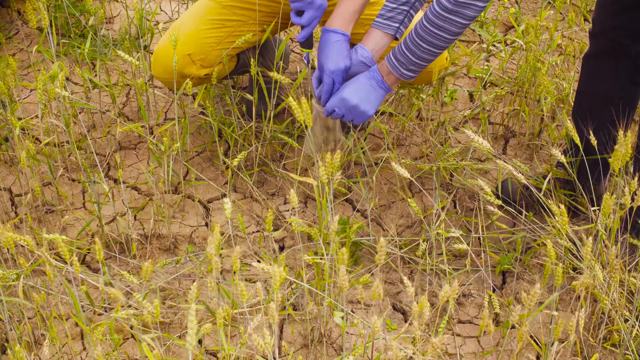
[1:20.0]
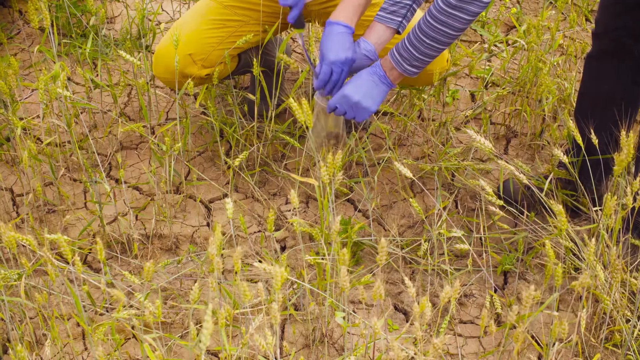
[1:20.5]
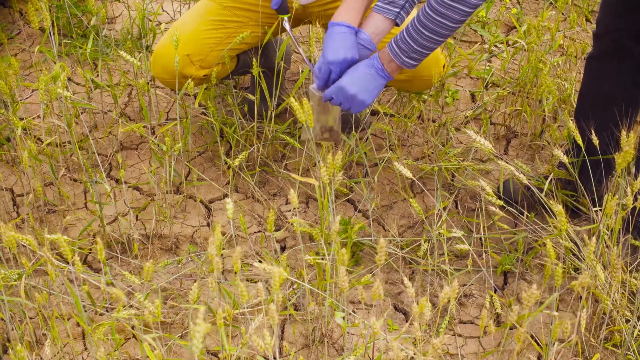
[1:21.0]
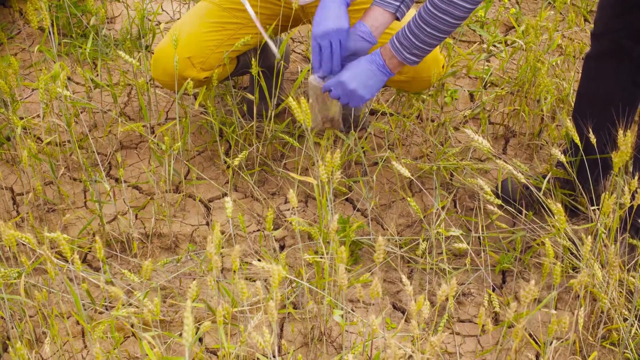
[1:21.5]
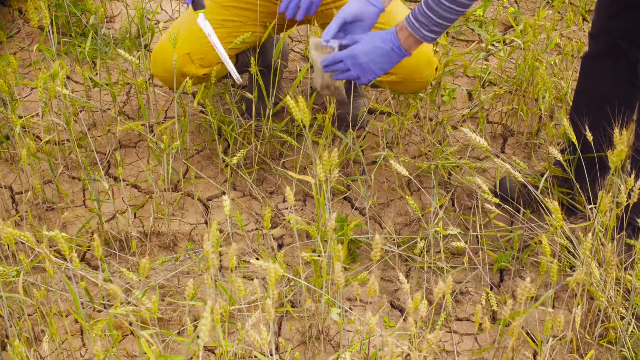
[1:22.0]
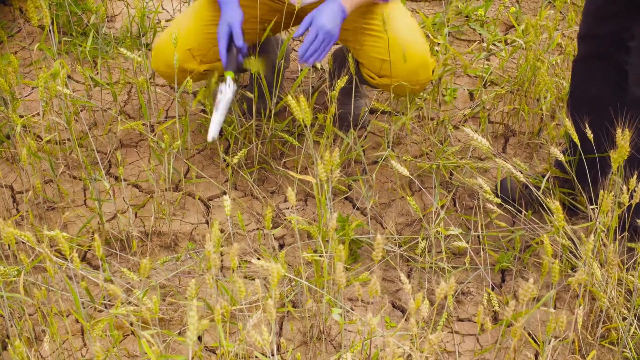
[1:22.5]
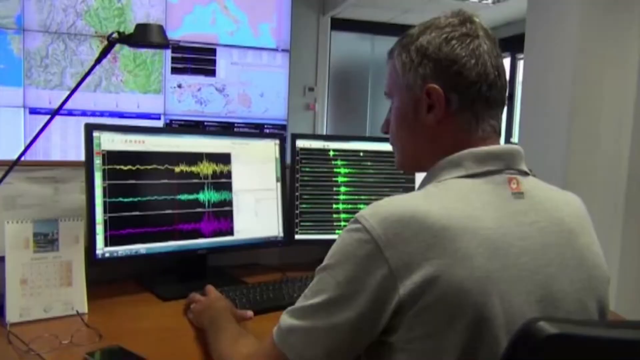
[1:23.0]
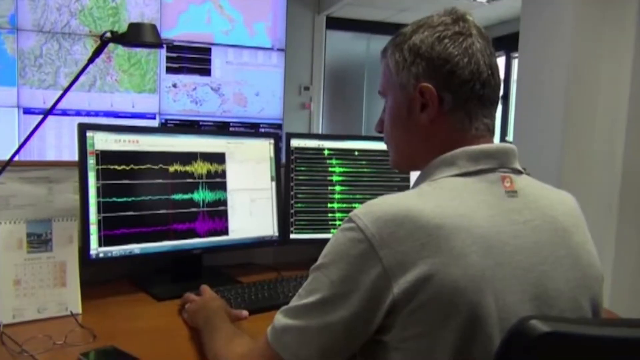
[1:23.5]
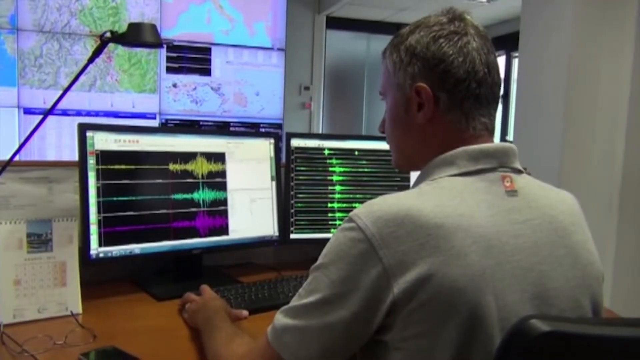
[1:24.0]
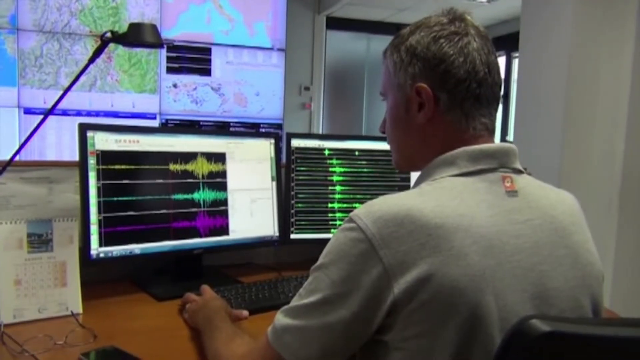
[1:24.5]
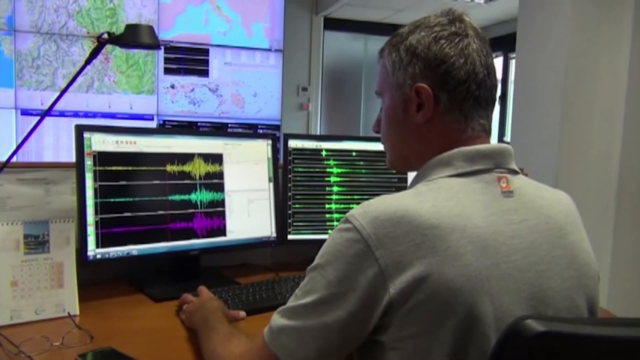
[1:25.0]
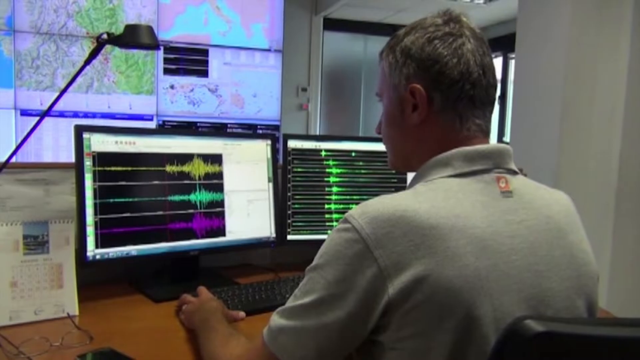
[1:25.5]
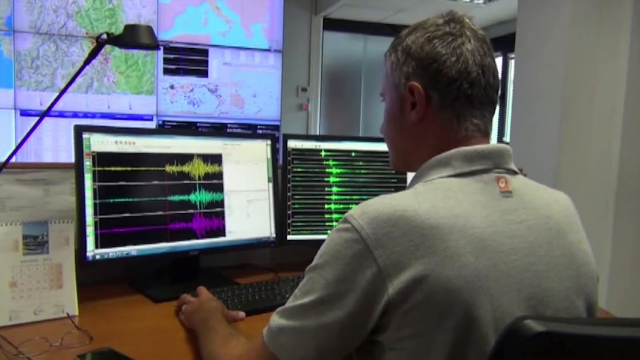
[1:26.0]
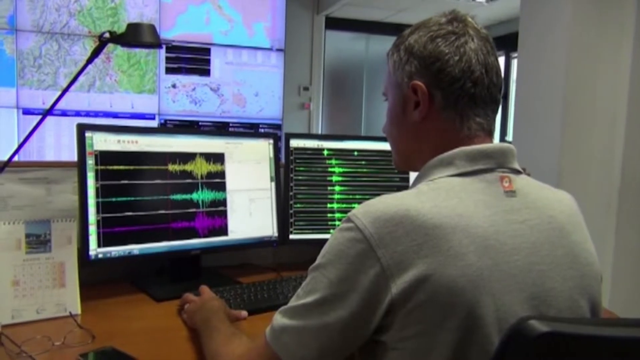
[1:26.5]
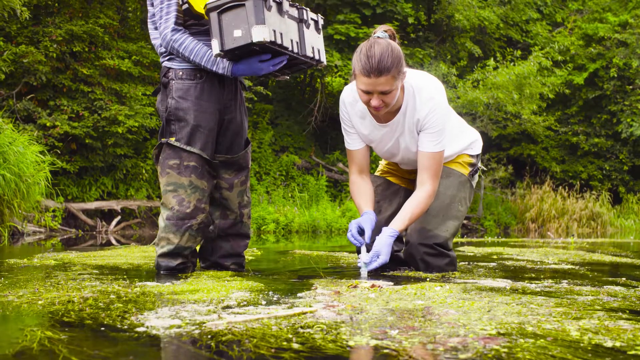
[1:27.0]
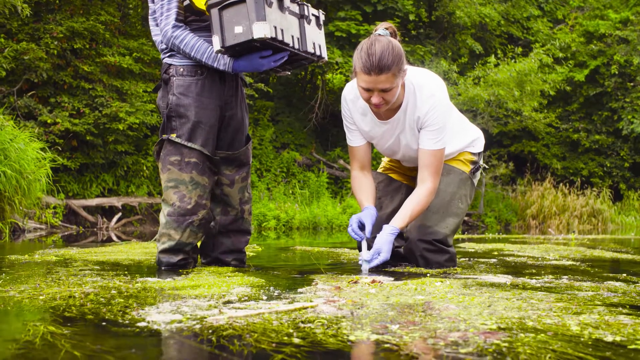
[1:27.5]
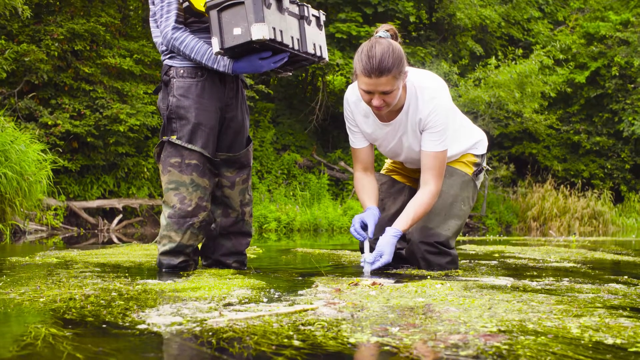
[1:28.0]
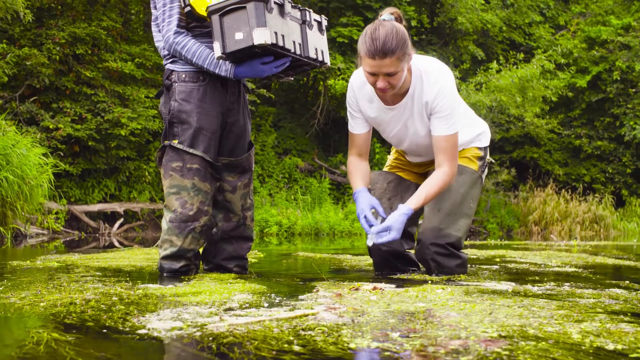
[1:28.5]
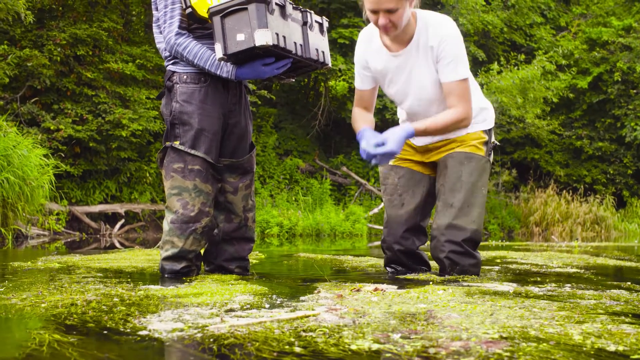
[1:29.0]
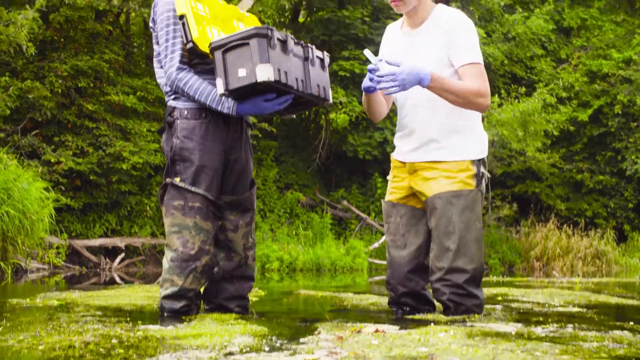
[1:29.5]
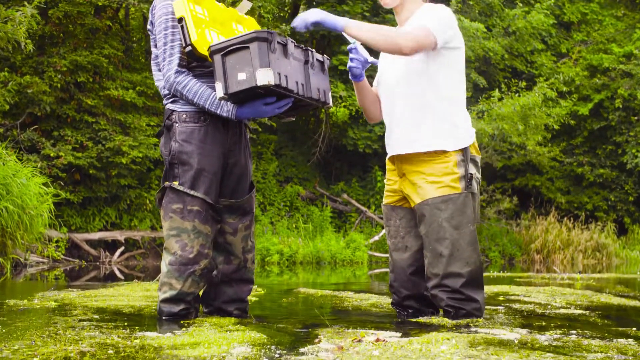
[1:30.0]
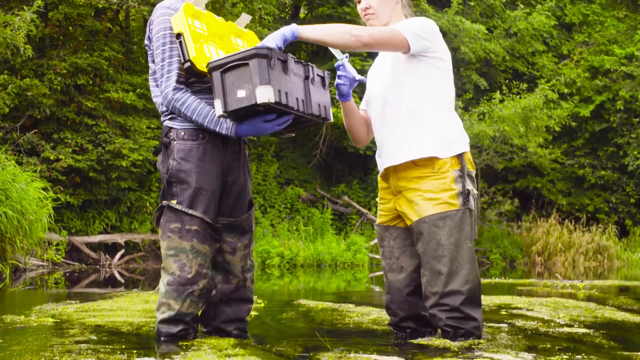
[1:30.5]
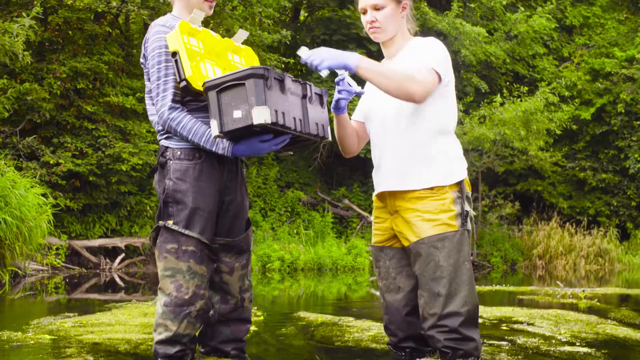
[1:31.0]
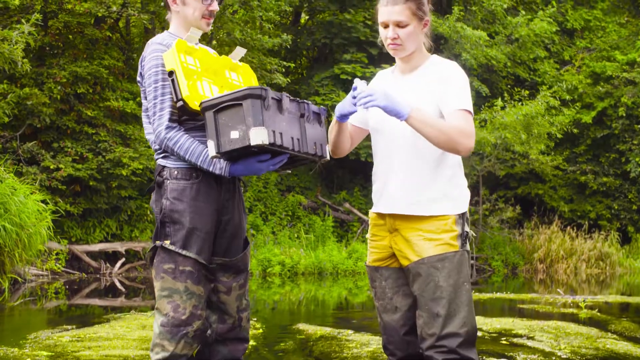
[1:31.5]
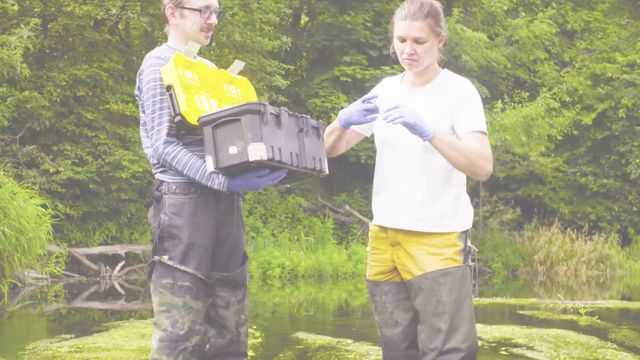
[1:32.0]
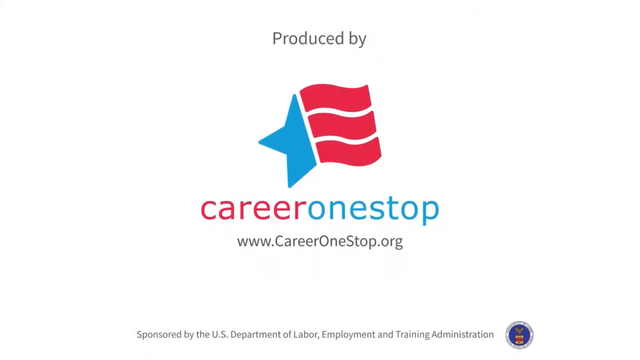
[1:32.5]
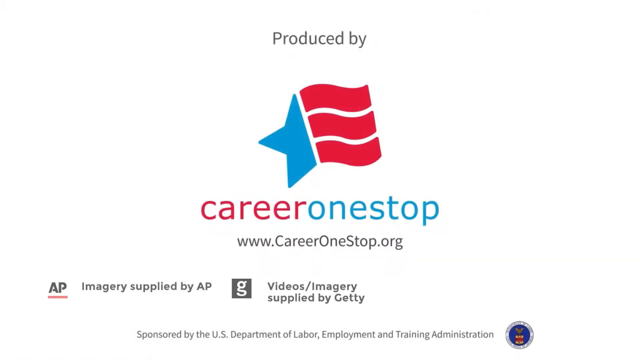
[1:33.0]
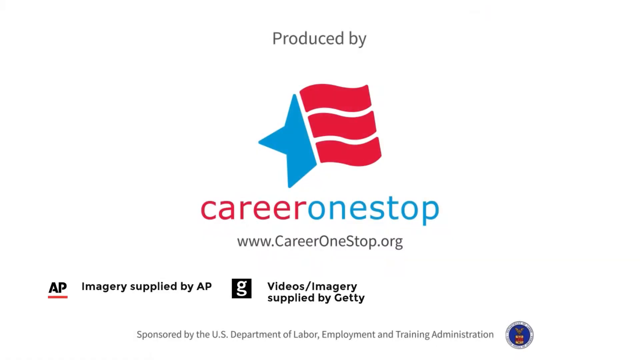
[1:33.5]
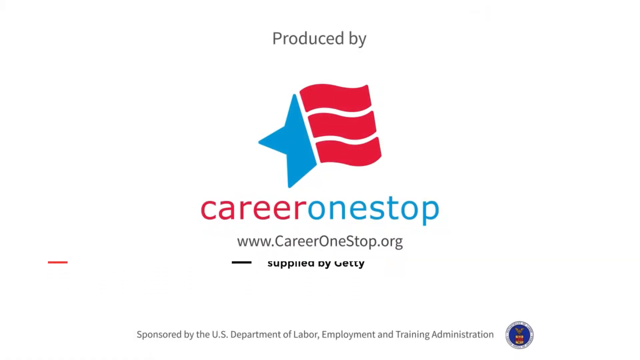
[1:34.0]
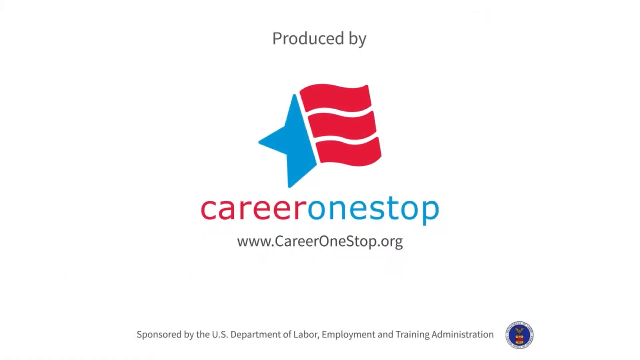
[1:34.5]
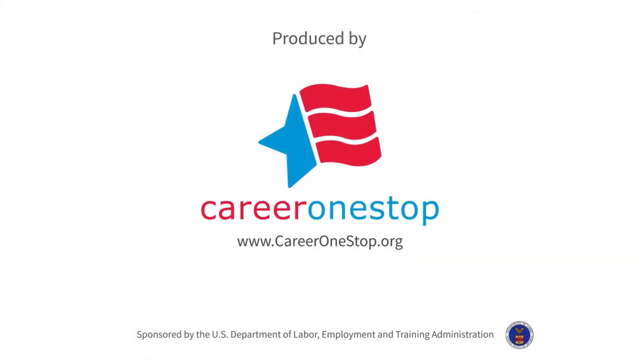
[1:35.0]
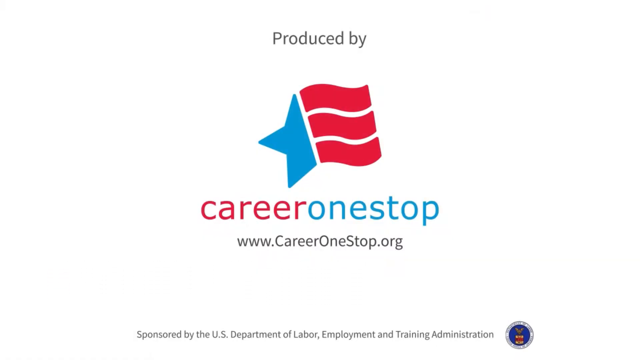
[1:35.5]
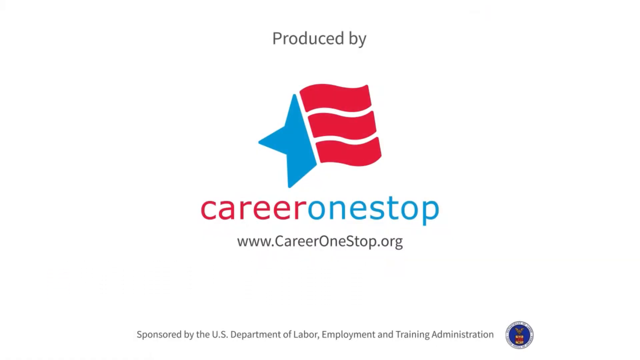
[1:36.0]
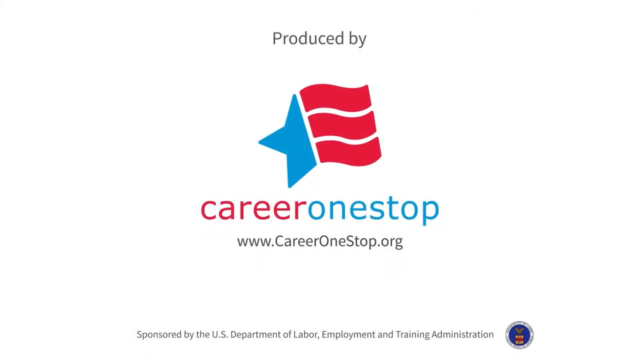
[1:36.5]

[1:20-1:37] People gather soil samples. The ground looks very dry, with lots of cracks in it, and weeds grow straight up. One man has what looks like a gardening spatula with a diamond-shaped head. Next, a person seated behind a desk looks at what kind of looks like seismic activity on his monitor, with maps on a larger monitor in front of him. Then a woman uses a syringe to gather water from a swampy area. The person on the left has what looks like the toolbox, which is open; she grabs something from inside it and looks like she is getting ready to put the sample in the box. In the final seconds, the screen goes white and reads "produced by Career One Stop," with the website shown under it, and indicates that it is sponsored by the U.S. Department of Labor Employee and Training Administration.